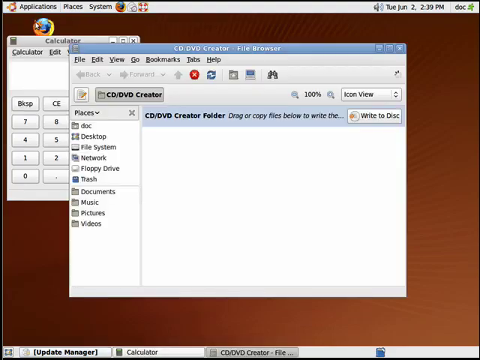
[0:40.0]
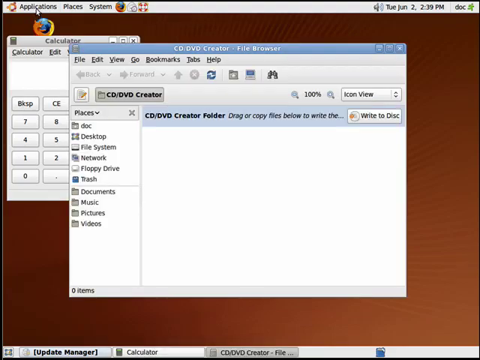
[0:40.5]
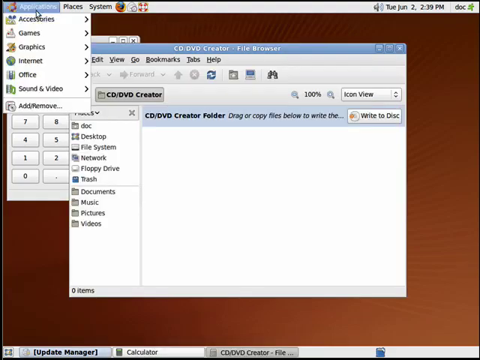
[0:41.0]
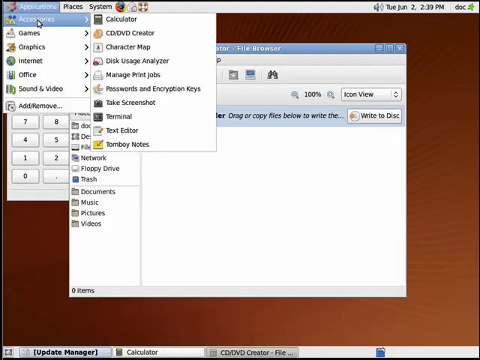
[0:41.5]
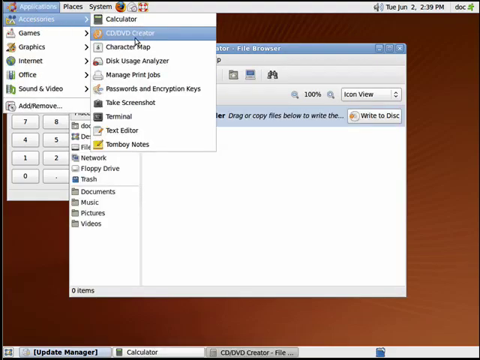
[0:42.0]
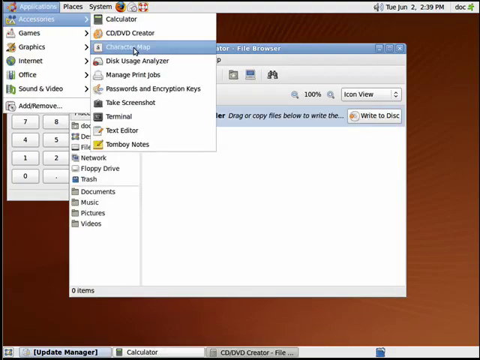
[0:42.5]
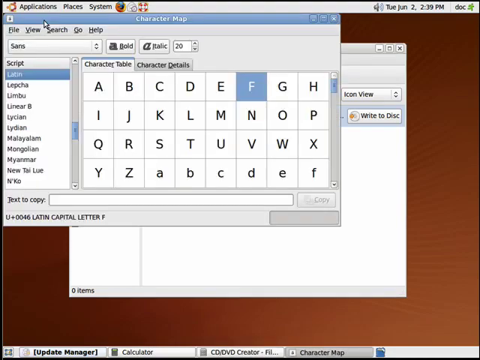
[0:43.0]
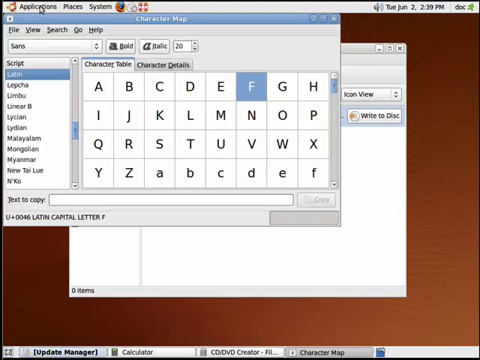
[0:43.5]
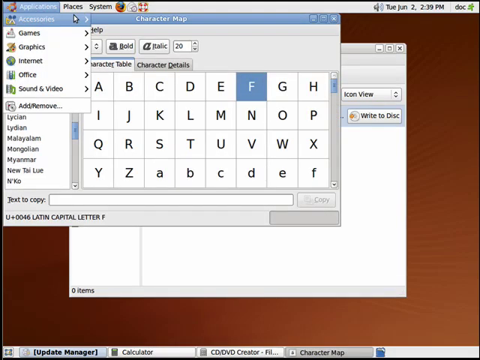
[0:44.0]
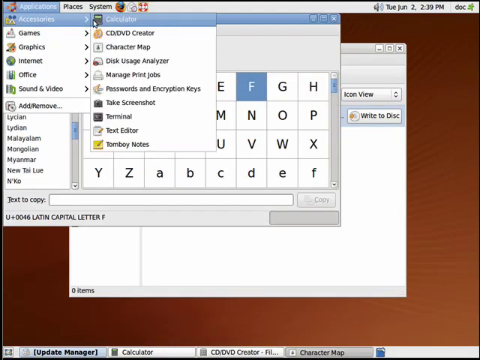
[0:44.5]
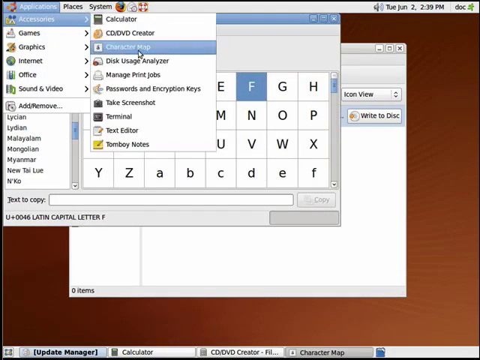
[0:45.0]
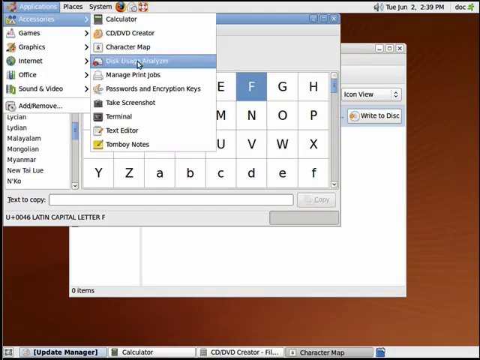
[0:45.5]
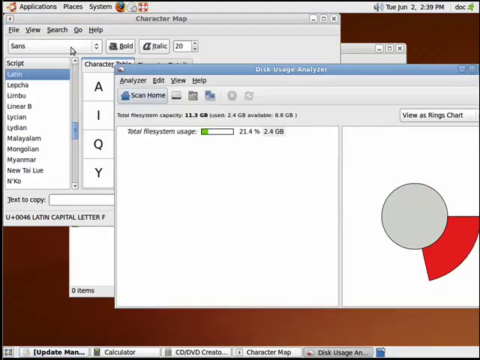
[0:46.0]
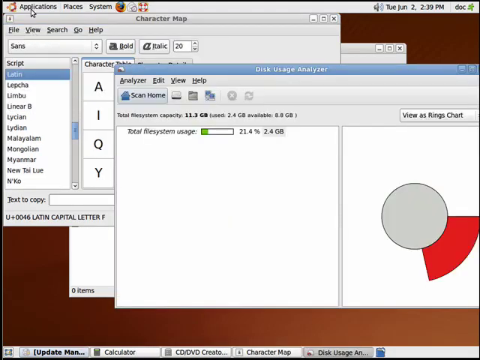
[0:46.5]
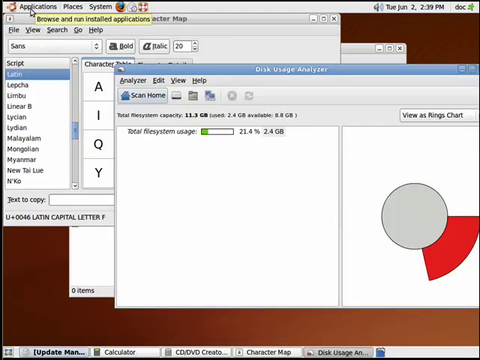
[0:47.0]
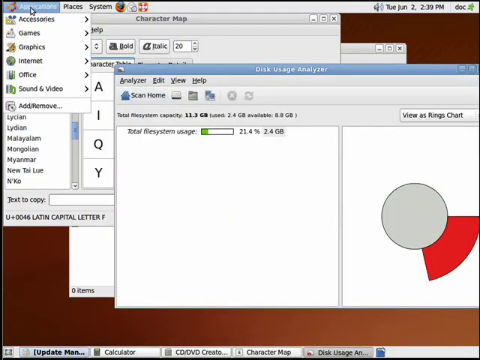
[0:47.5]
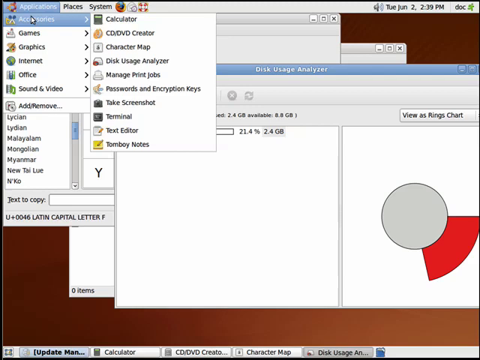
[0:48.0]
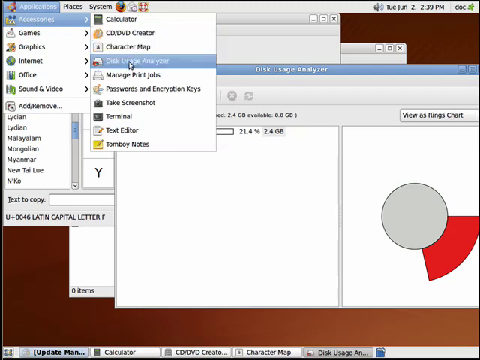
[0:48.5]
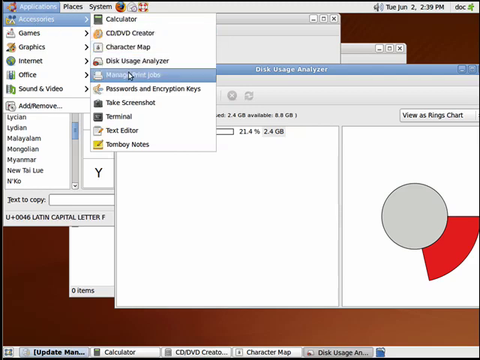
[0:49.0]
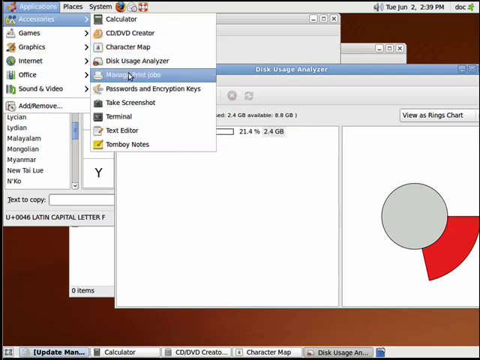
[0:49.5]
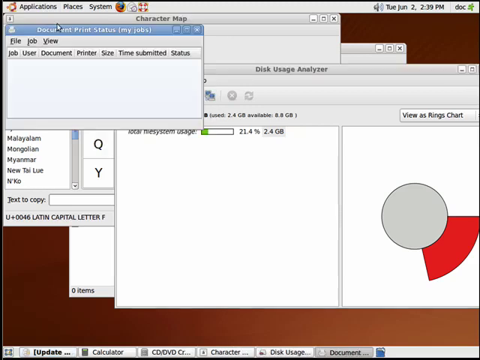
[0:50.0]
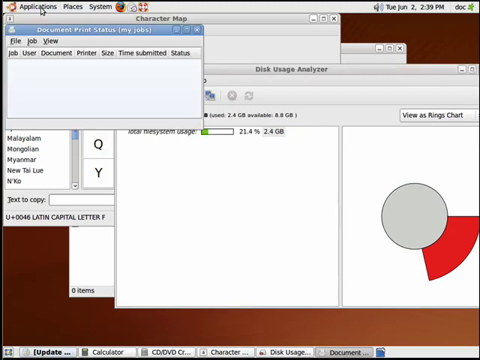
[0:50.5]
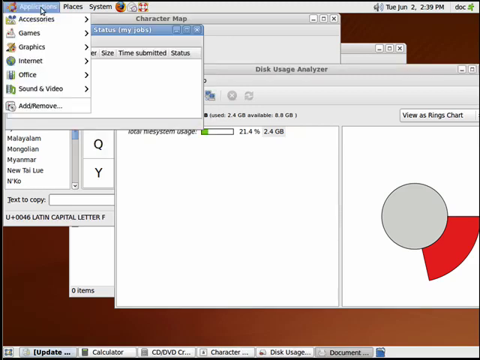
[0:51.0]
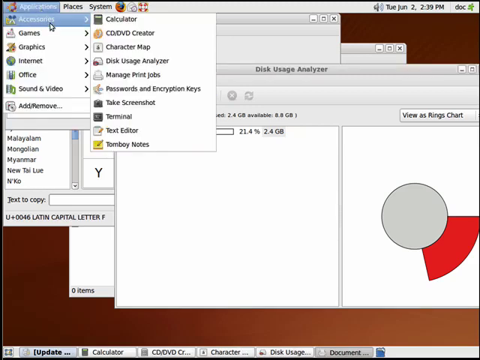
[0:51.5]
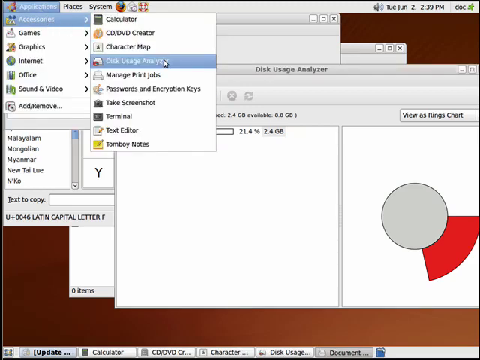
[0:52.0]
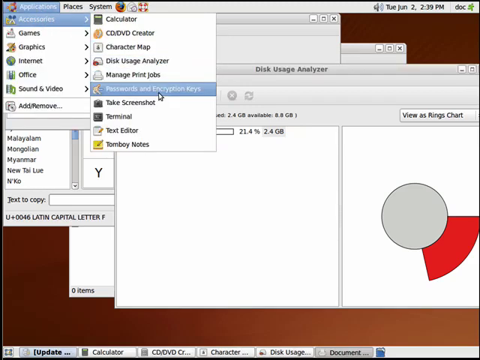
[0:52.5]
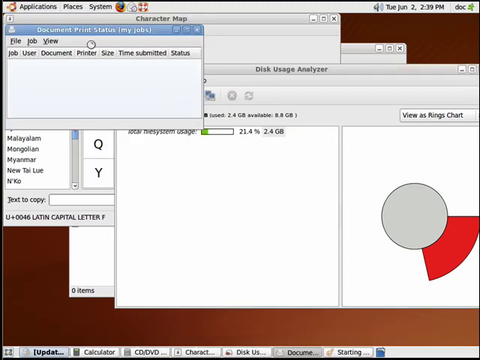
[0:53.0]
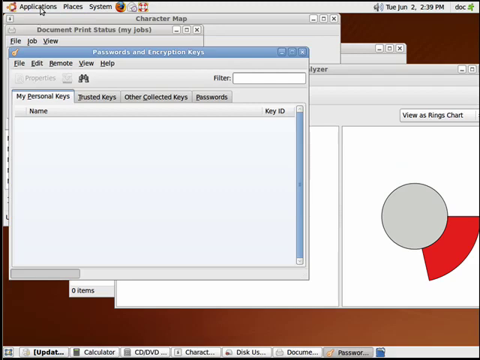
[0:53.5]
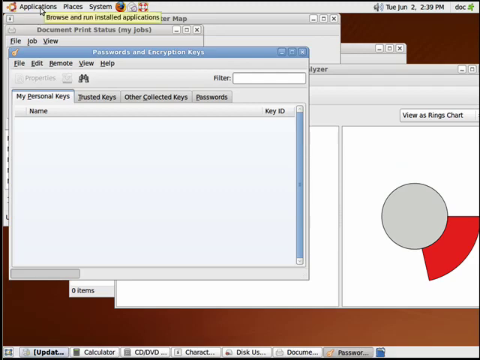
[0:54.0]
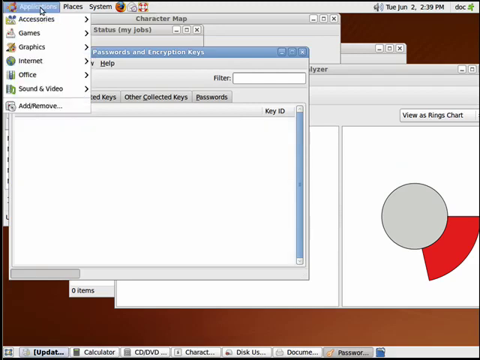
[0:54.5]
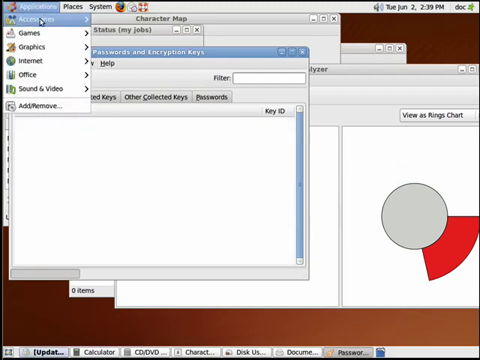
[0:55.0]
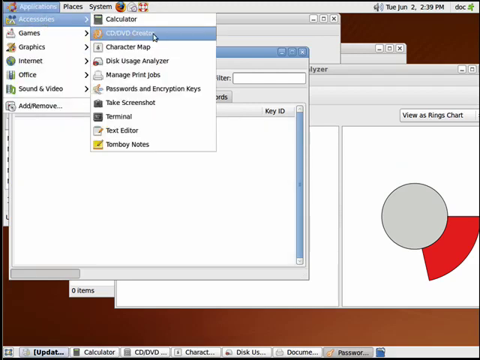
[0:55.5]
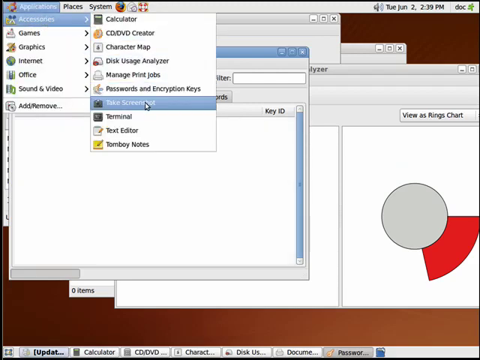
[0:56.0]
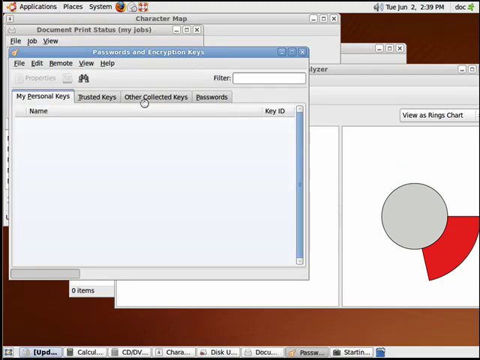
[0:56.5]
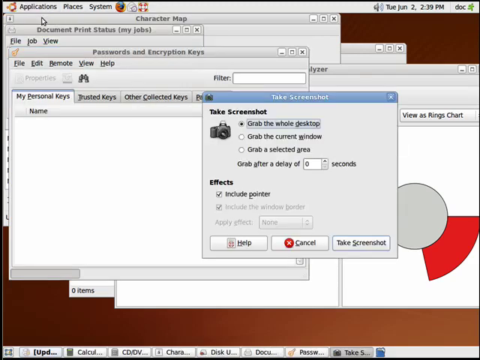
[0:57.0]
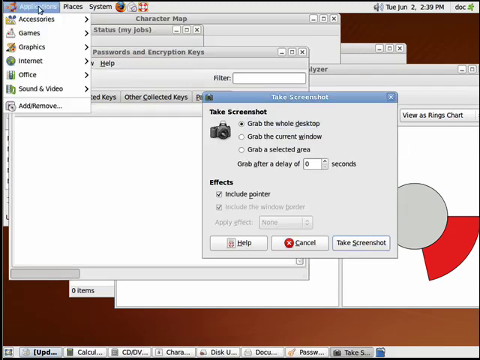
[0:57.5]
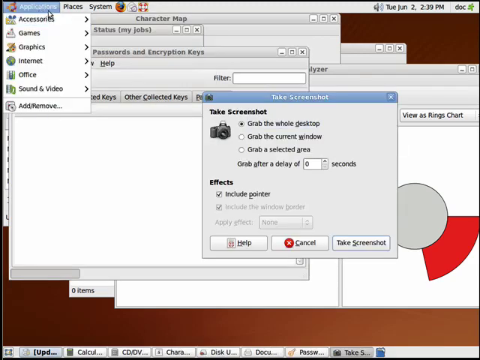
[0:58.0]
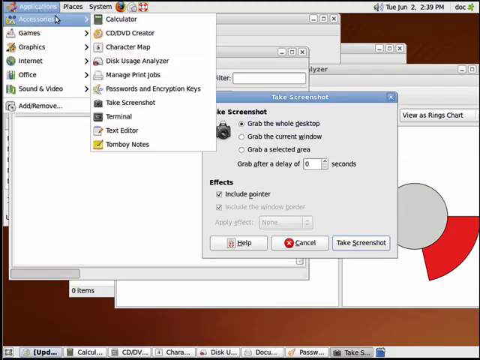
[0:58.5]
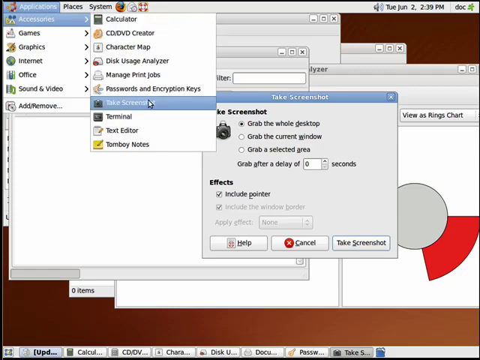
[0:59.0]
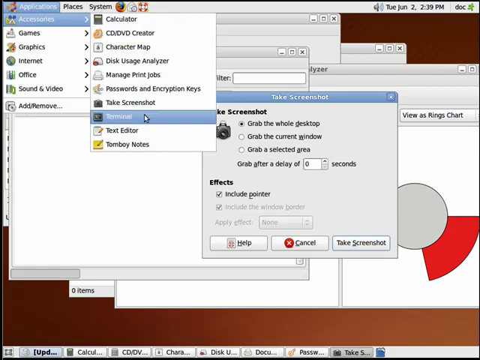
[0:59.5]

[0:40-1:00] The butterscotch tutorial, a beginner's guide to Ubuntu Linux, part 7 of 10, general software, continues. The desktop has a single browser, Firefox. At the very top of the screen the person clicks on Applications, and a calculator pops up. They click on something else, and the screen shows "CD, DVD creation" and "File Browser", along with what looks like a place for saving and downloading files. Many things are opened. They go back to Accessories and open Disk Usage Analyzer, which has two parts, sort of two columns, and shows "View as Rings Chart", a ring chart rather than a pie chart. They then go through Management Jobs, Accessories, Passwords and Encryption, Accessories, Take Screenshot, and Accessories, Terminal, leaving many small windows open.